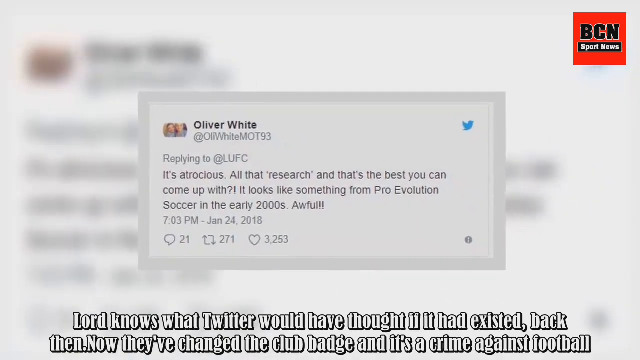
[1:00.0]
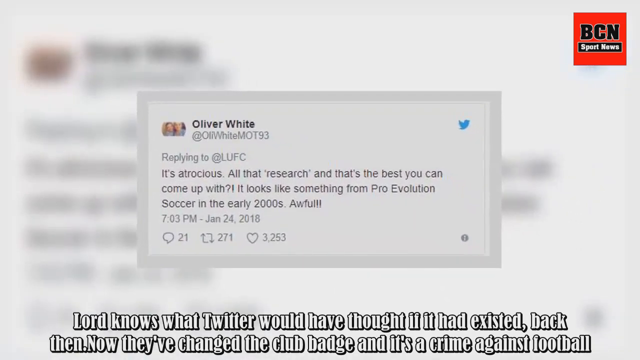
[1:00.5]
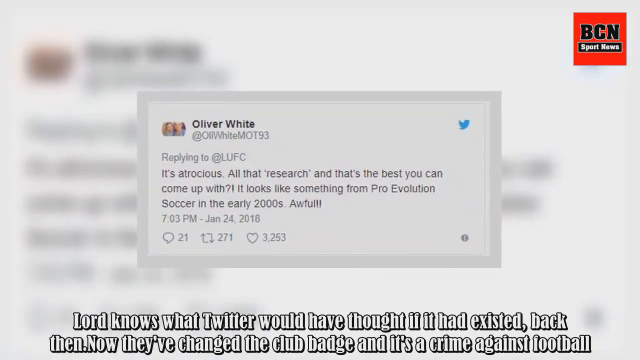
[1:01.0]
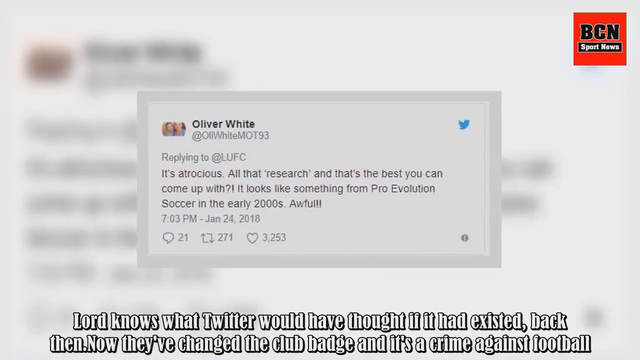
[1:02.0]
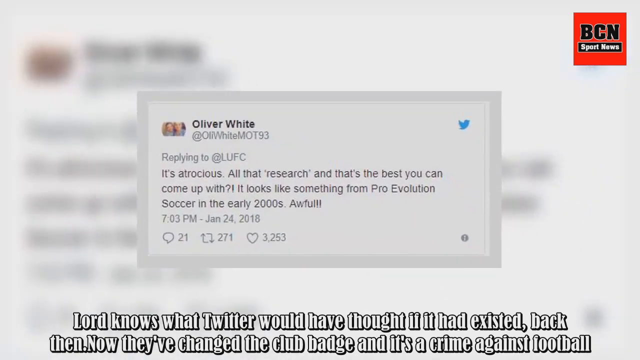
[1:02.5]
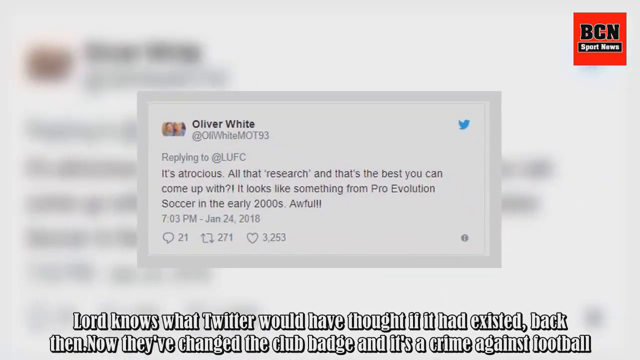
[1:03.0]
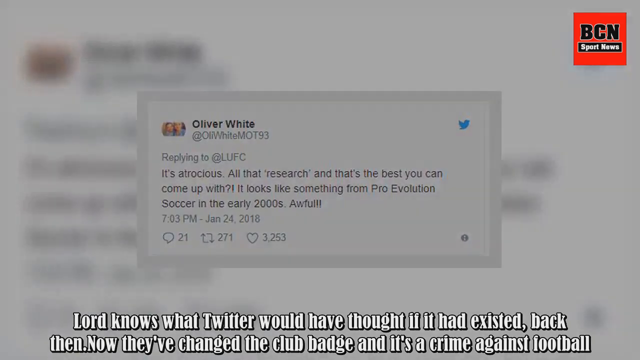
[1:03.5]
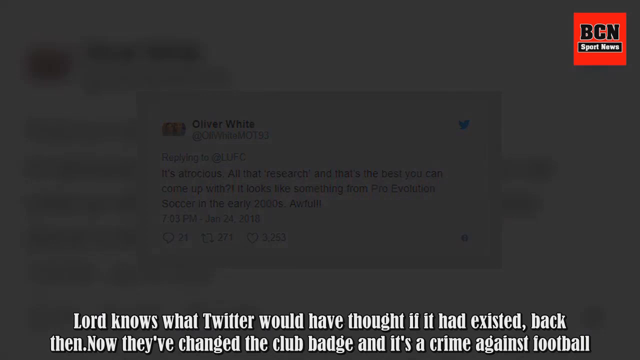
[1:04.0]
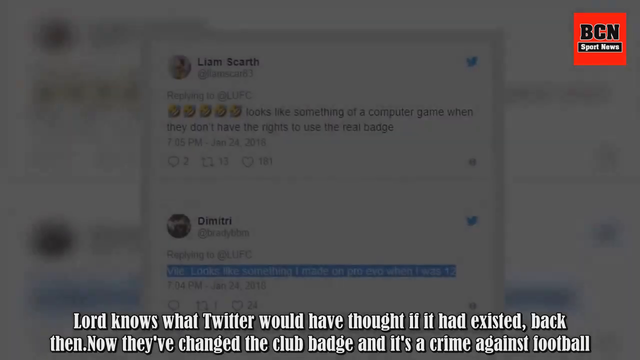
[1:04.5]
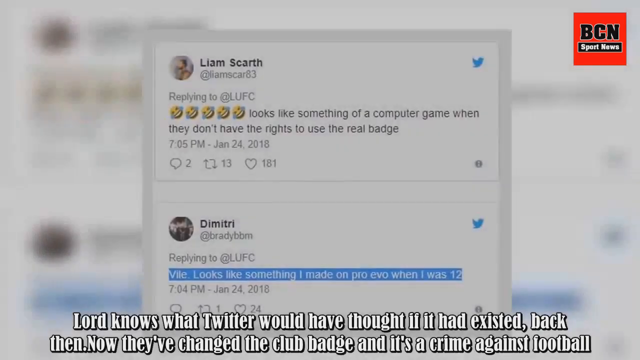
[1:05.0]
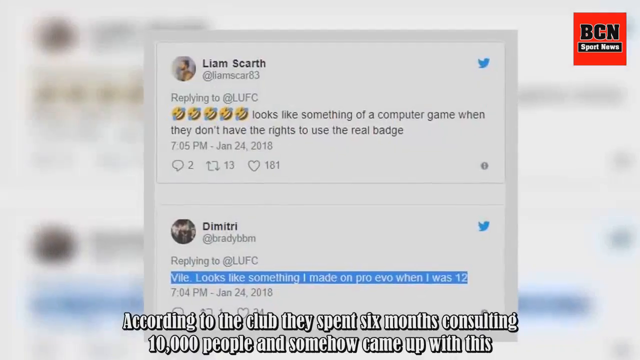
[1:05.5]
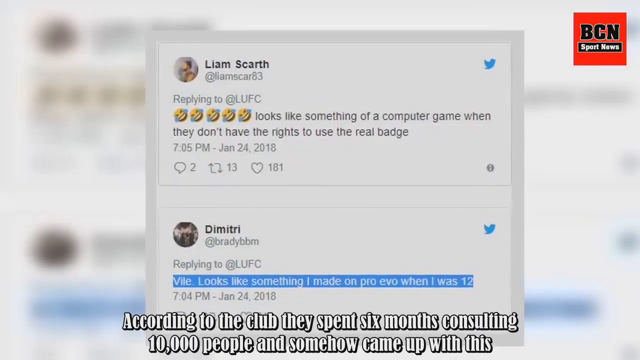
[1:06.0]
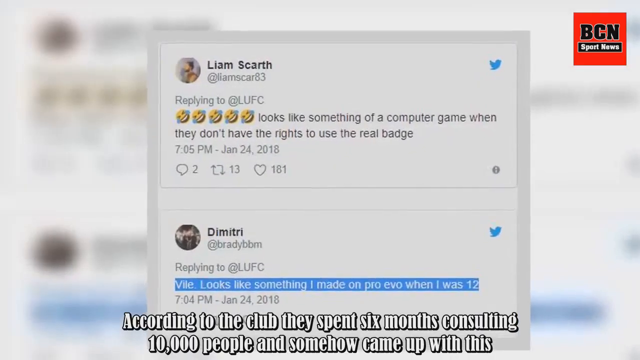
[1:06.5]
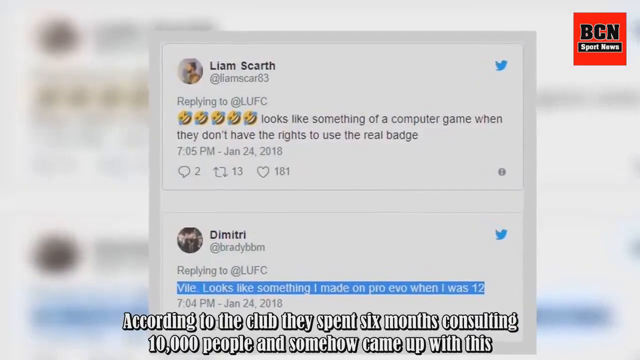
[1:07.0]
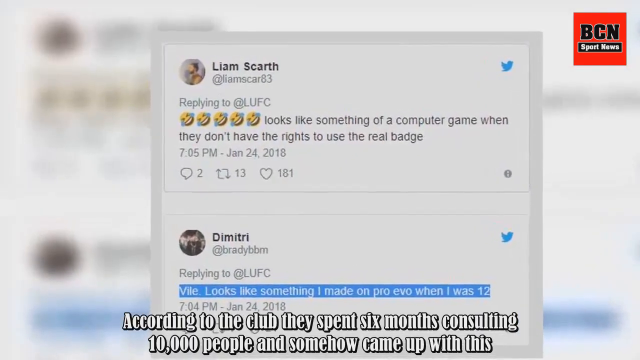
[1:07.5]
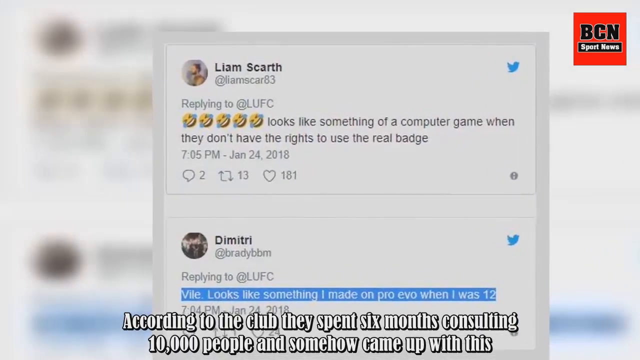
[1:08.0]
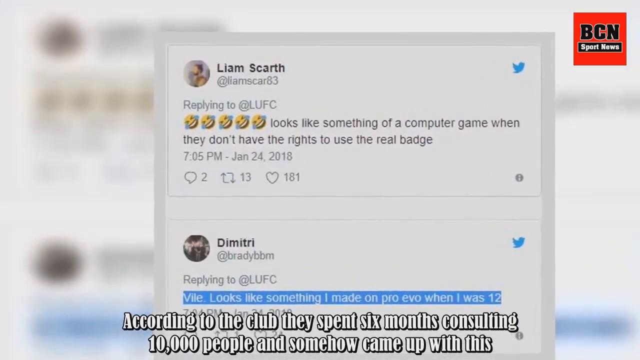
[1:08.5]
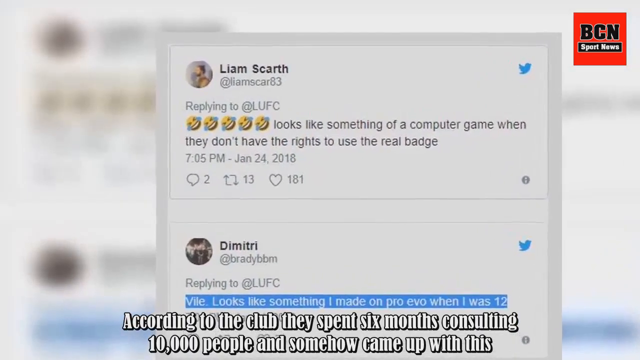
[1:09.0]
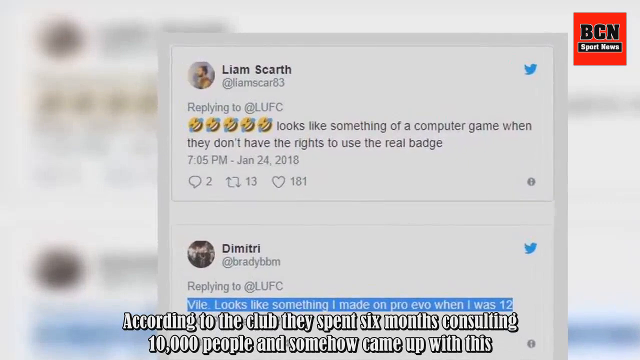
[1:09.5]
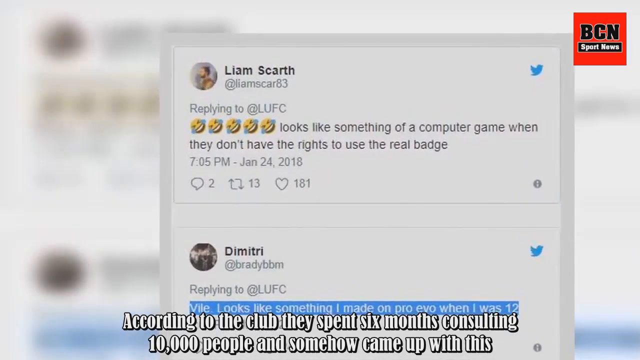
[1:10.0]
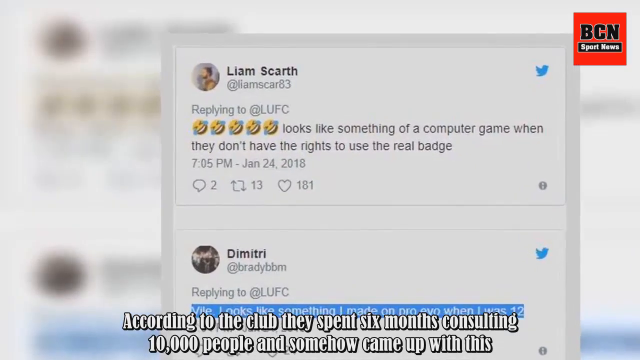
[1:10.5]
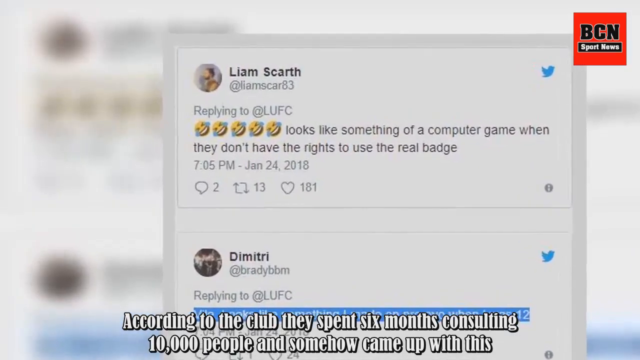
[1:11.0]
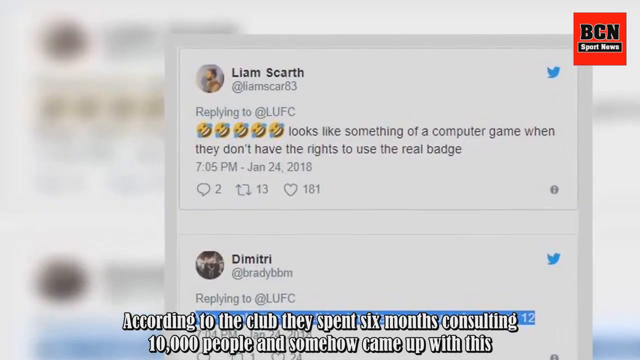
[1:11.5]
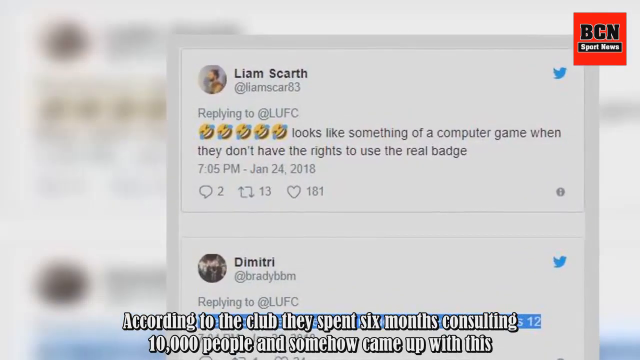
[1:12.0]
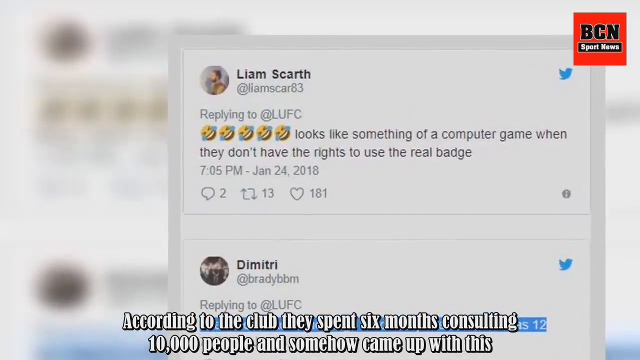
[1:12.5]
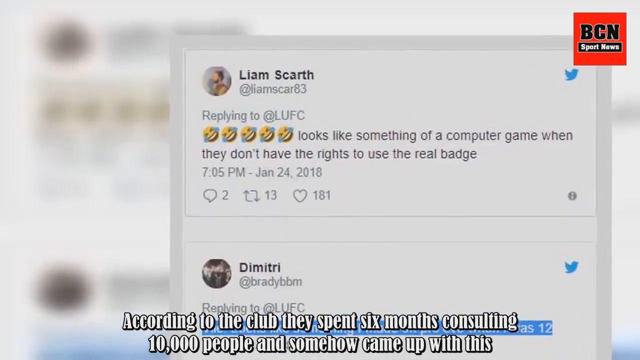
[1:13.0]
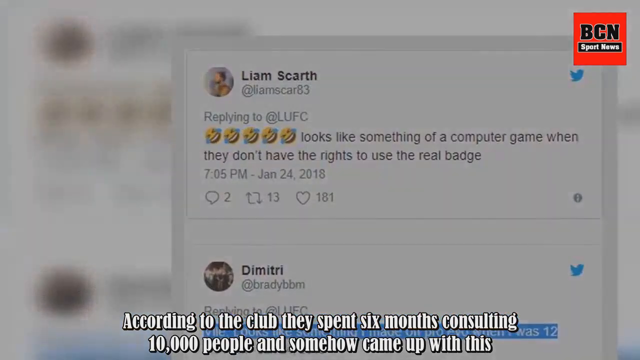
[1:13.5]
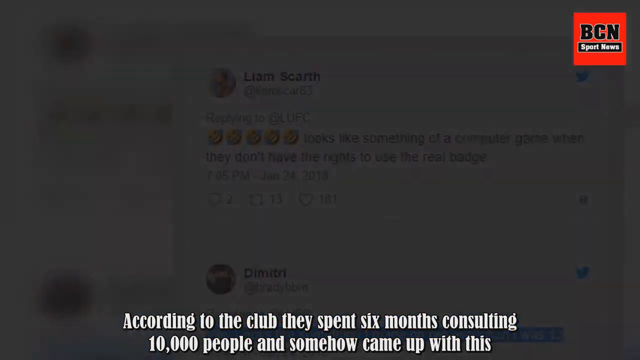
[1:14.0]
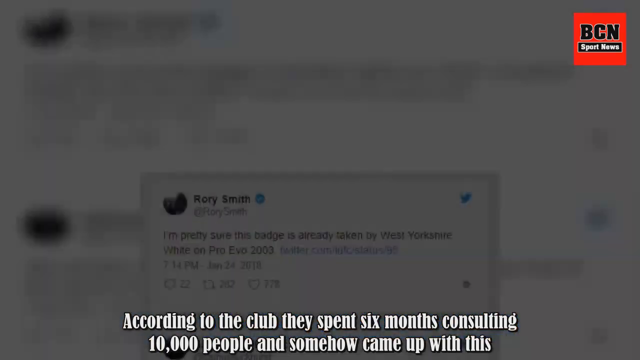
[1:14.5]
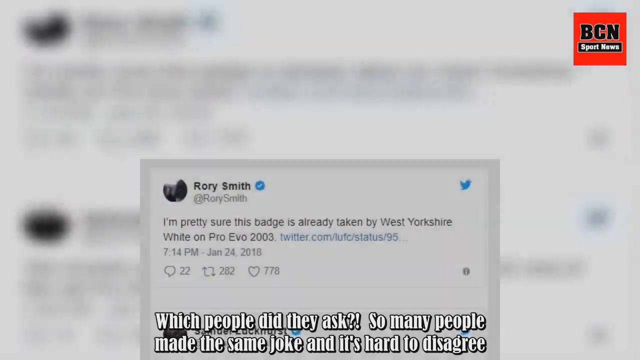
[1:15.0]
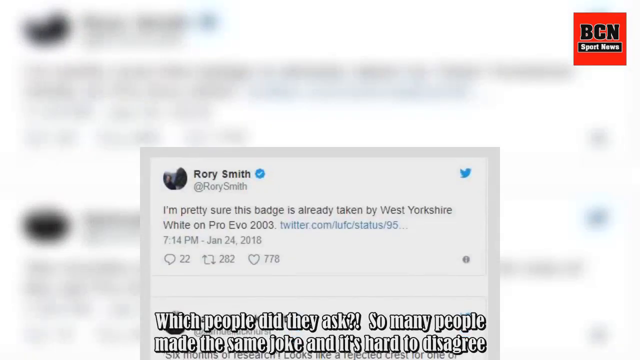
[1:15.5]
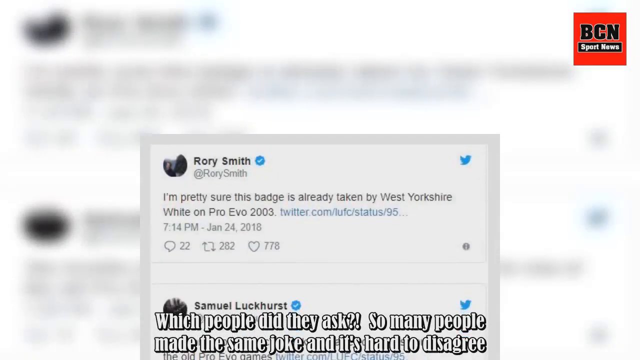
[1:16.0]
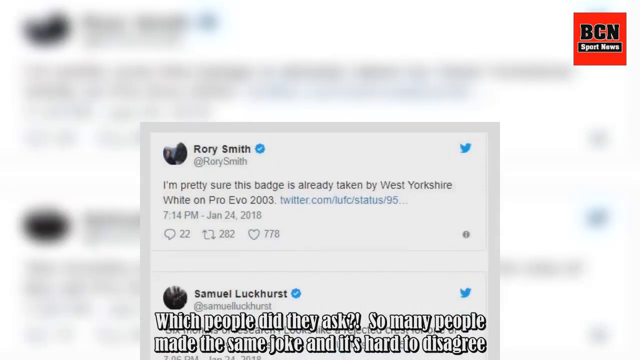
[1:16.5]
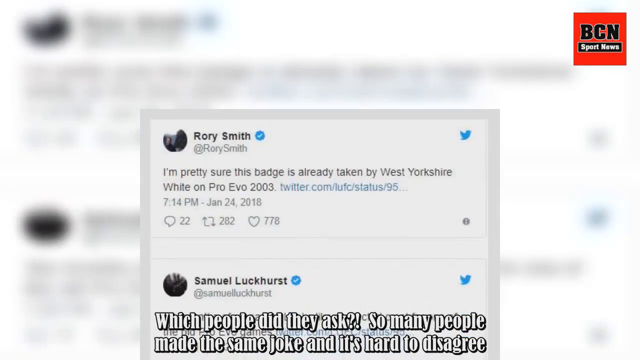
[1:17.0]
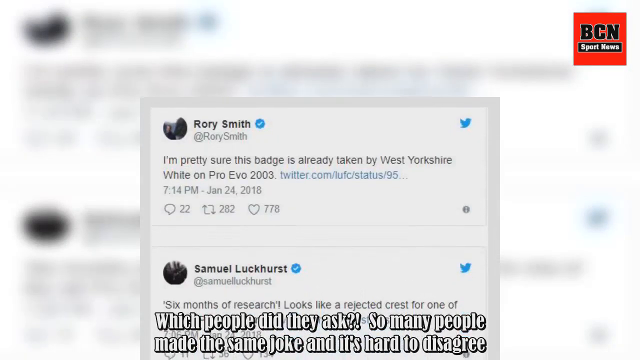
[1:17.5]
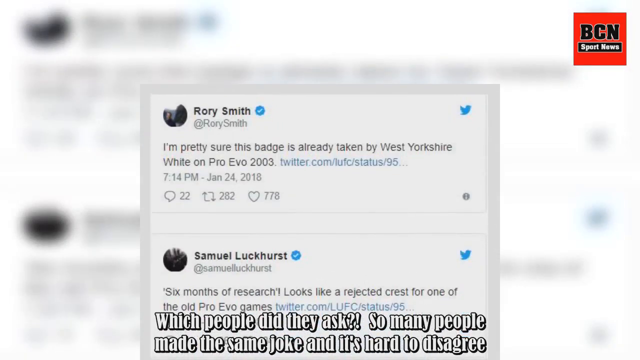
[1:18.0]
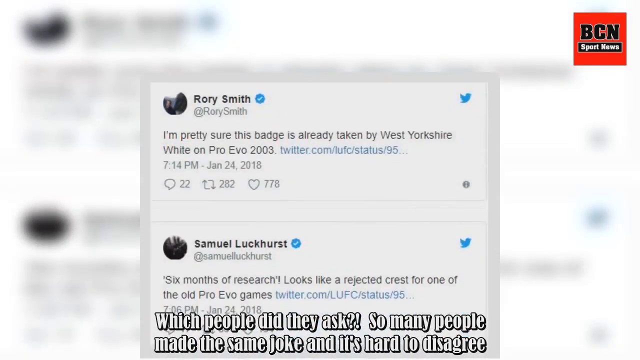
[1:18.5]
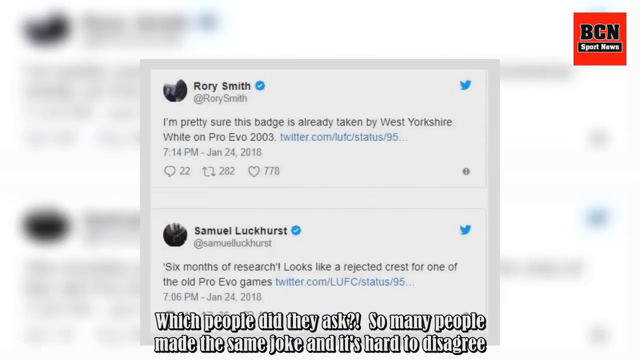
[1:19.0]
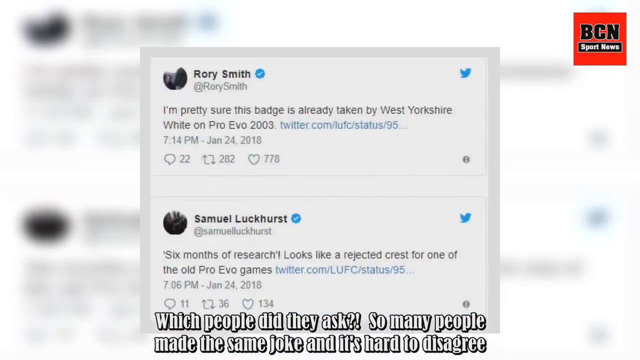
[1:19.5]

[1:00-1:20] A Twitter post that seems to be written by a person named Oliver White is in the middle of the screen, with the same post blurred in the background and white text at the bottom of the screen. It fades out, and a new post by Liam Scarth appears in the middle of the screen, with another Twitter post by someone named Dimitri underneath. White text at the bottom of the screen reads "According to the club, they spent six months consulting 10,000 people and somehow came up with this." That fades out, and two more tweets, from Rory Smith and Samuel Luckhurst, come up from the bottom toward the top. As they rise, text at the bottom of the screen reads "which people did they ask? So many people made the same joke and it's hard to disagree."